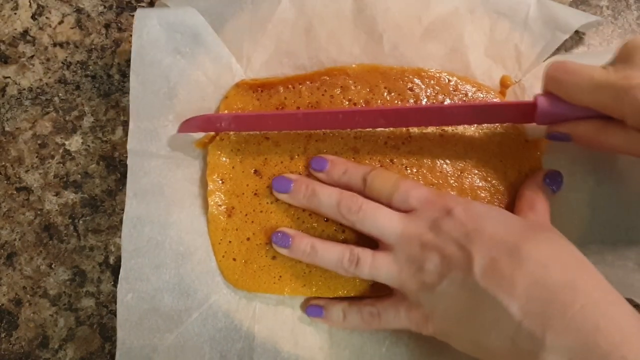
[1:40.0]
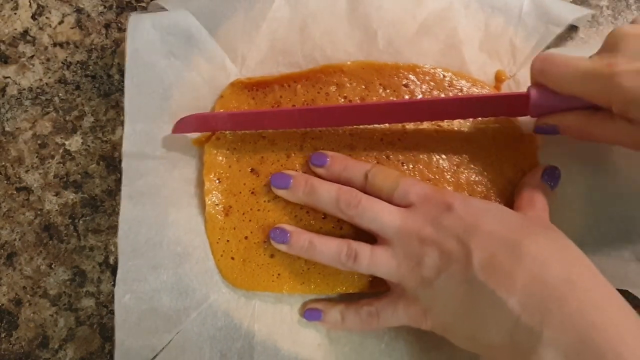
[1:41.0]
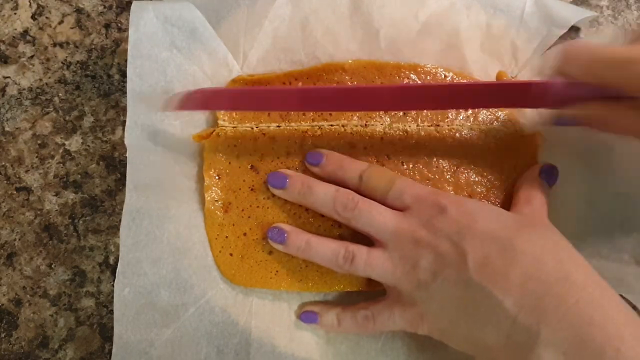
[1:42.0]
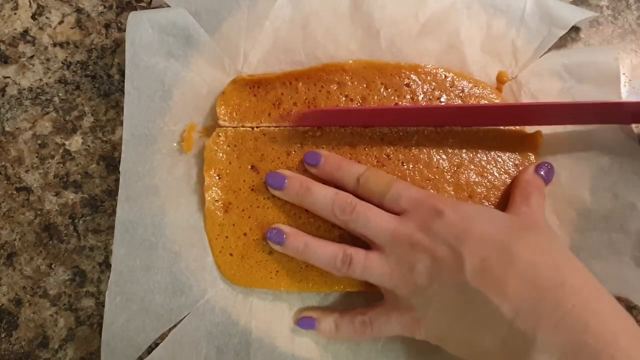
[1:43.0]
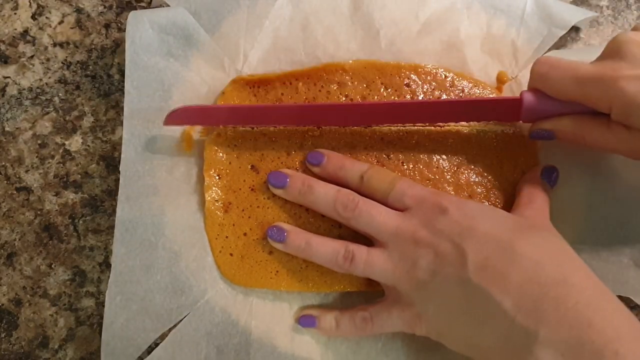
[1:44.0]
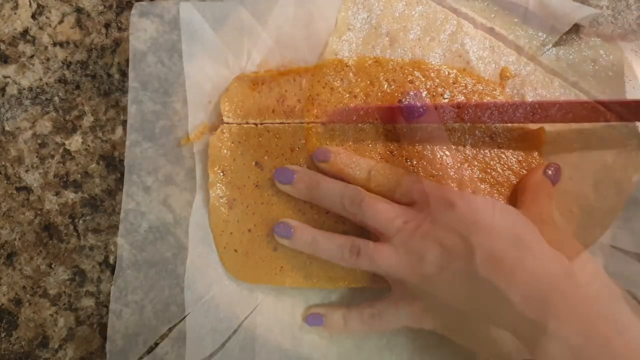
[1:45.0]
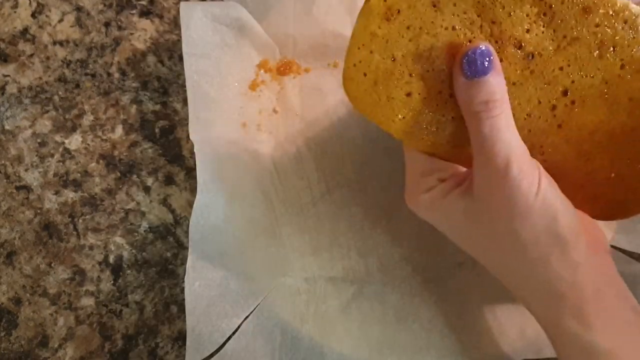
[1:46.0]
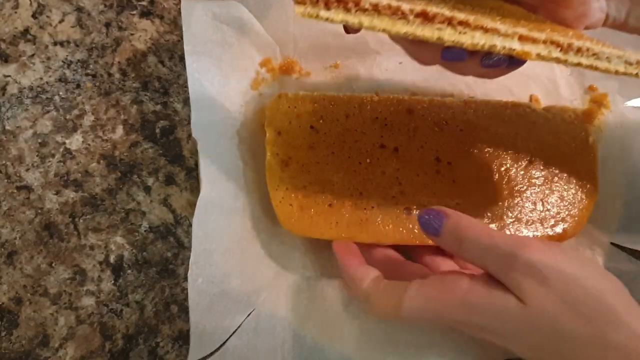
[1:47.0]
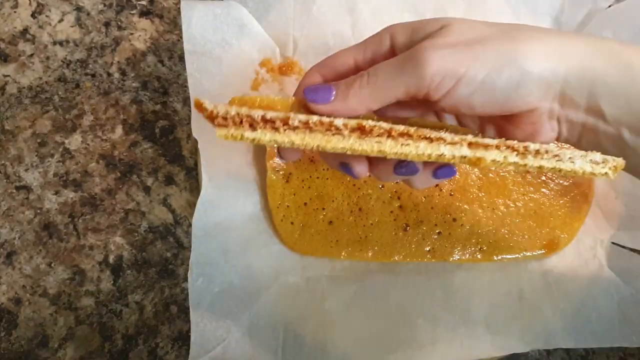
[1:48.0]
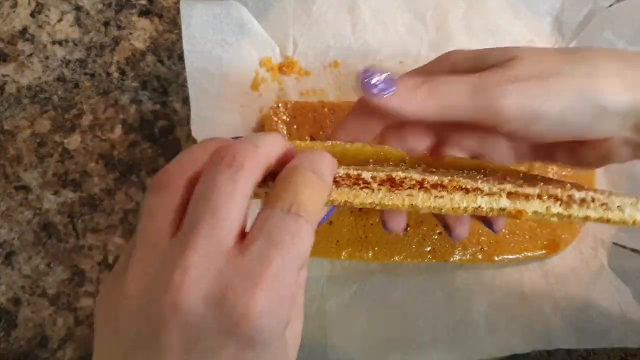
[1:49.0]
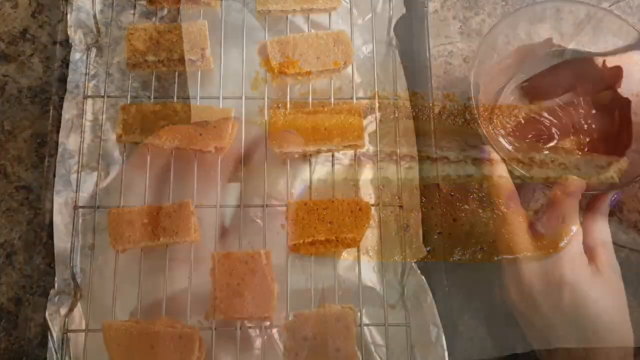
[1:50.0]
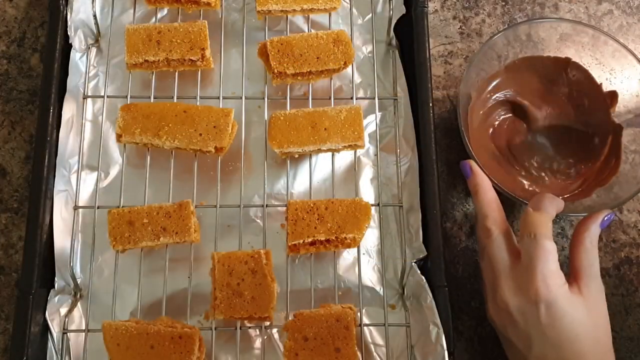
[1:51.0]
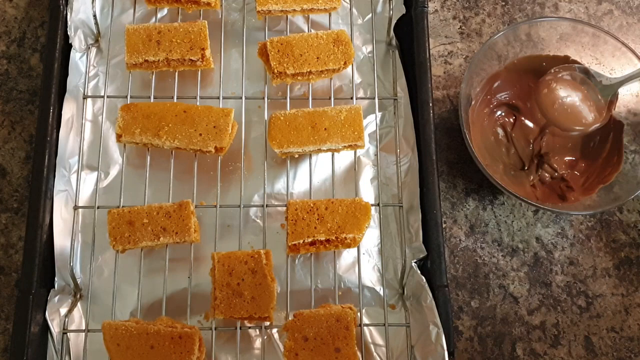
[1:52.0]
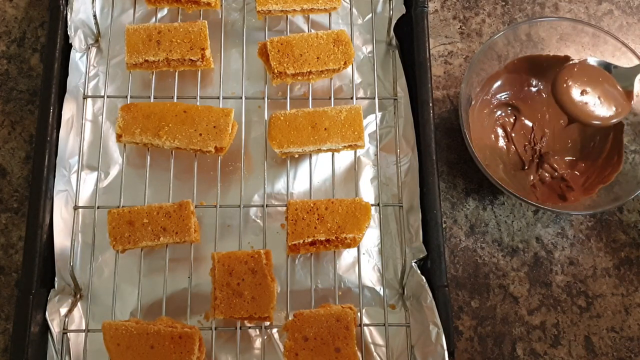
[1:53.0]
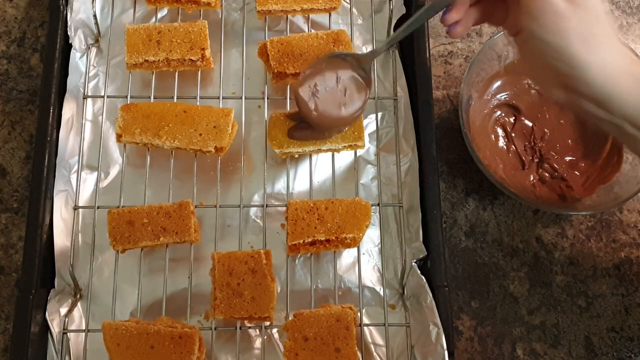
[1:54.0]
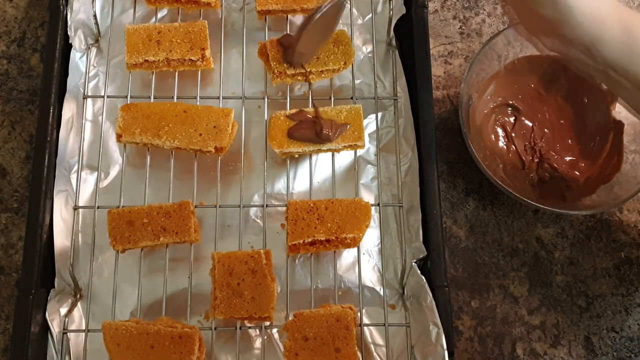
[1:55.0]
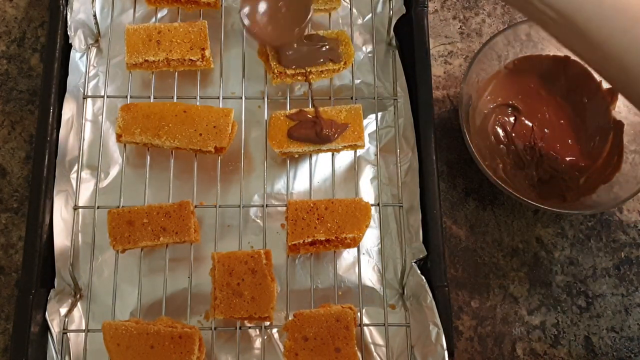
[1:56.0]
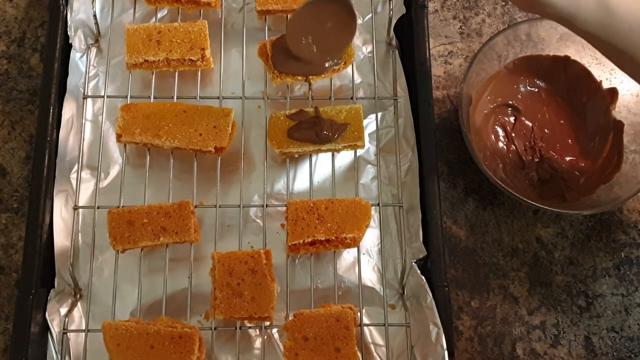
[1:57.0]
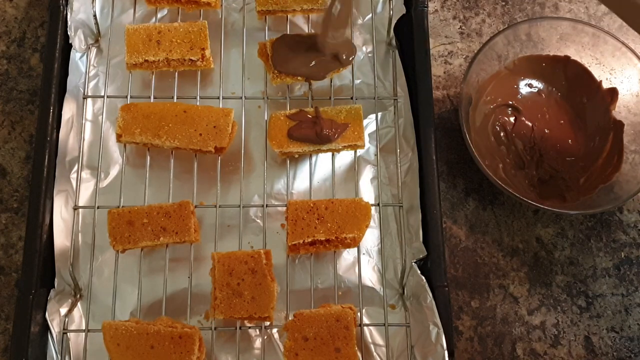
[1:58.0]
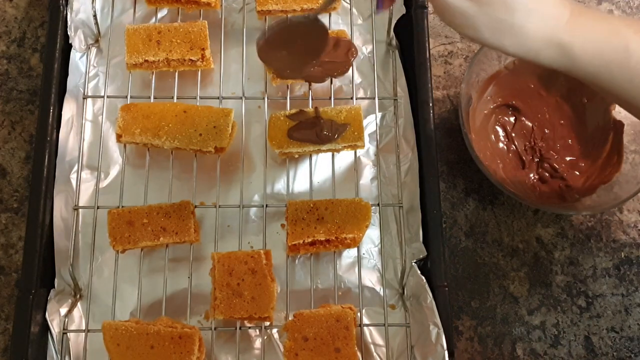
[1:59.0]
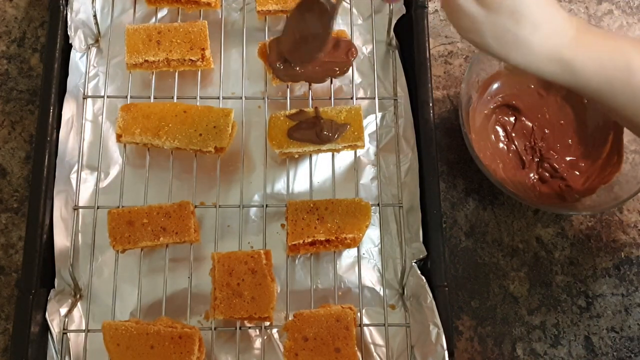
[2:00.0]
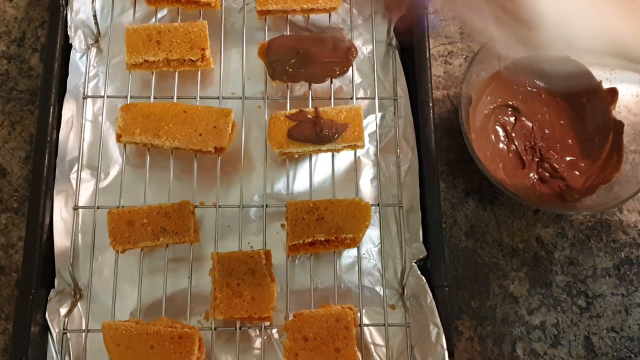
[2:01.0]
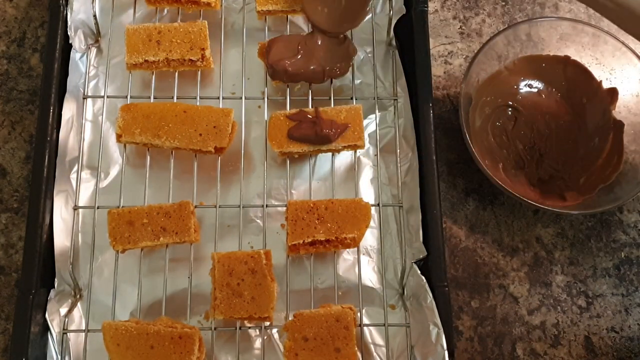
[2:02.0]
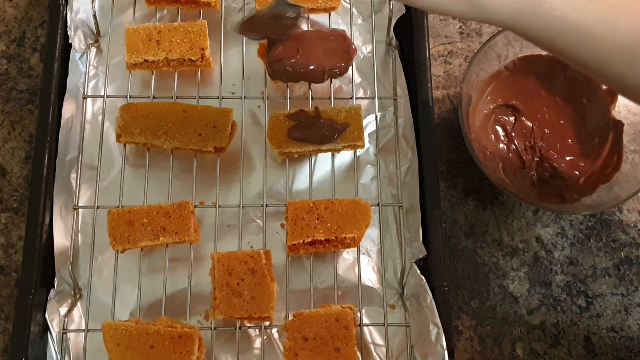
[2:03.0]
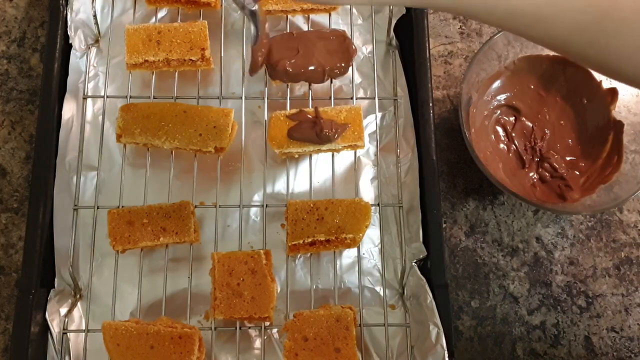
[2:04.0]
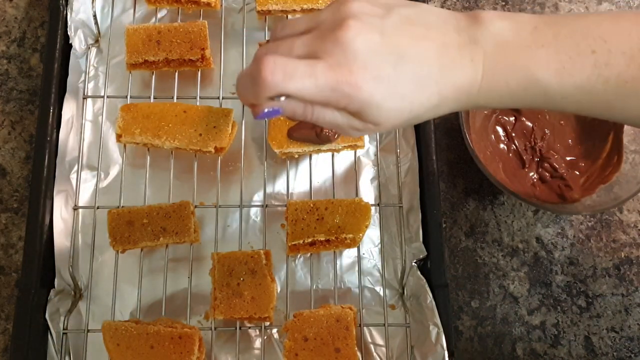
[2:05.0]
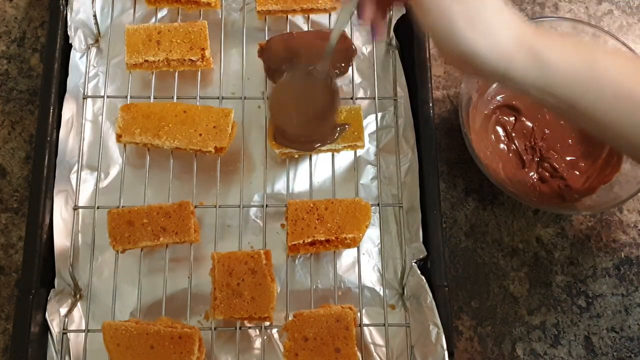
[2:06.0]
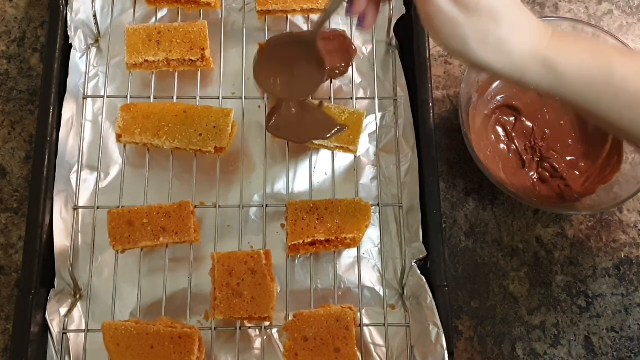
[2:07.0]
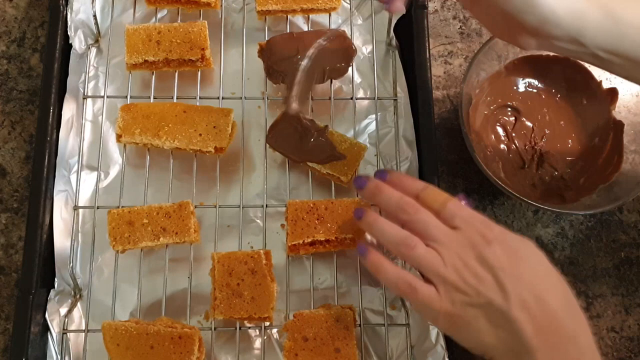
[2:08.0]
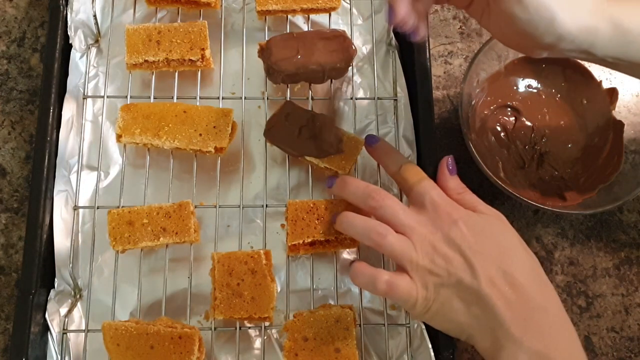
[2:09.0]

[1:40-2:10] The white hands with purple painted nails use the pink serrated knife to try to slice the mixture, creating a score line across the top. It looks like this takes some effort, as the mixture has hardened quite a bit, and they saw at it several times. The video then transitions to them picking up the entire slab and cracking and breaking it with their hands. They bring the broken-off piece closer to the camera; it looks hard, crispy and slightly layered, and it seems to contain air pockets or bubbles. Next, a pan lined with foil is shown, with a metal grate on top of the sheet pan, sort of like the kind used for cooling cookies. A hand uses a spoon to scoop what looks like melted chocolate out of a bowl onto two pieces of the crispy treat, spreading it around with the back of the spoon and taking time to coat the piece thoroughly in chocolate.